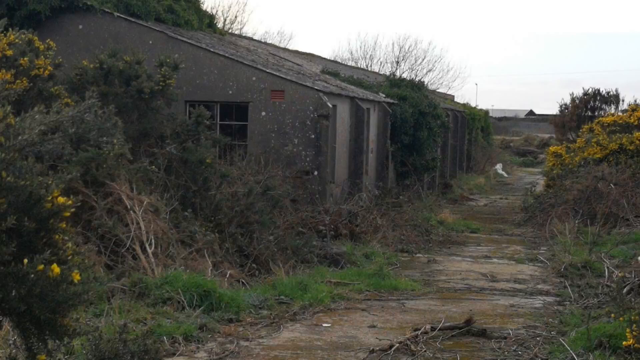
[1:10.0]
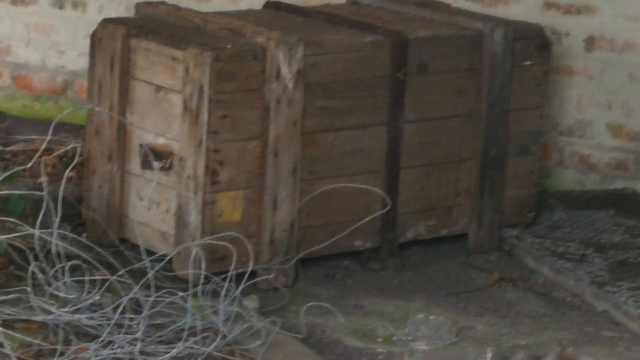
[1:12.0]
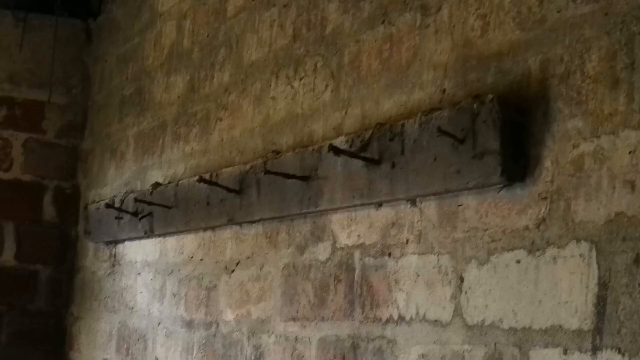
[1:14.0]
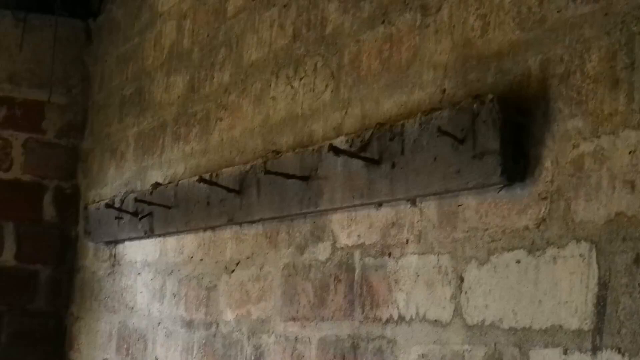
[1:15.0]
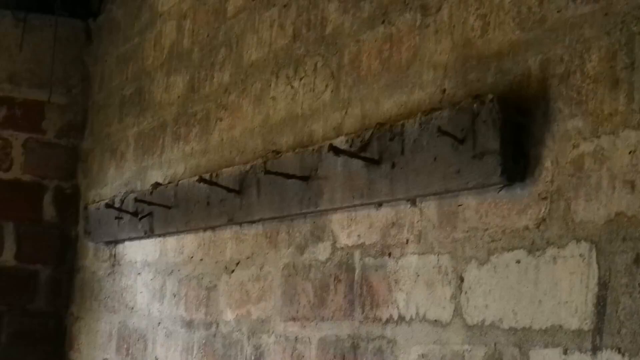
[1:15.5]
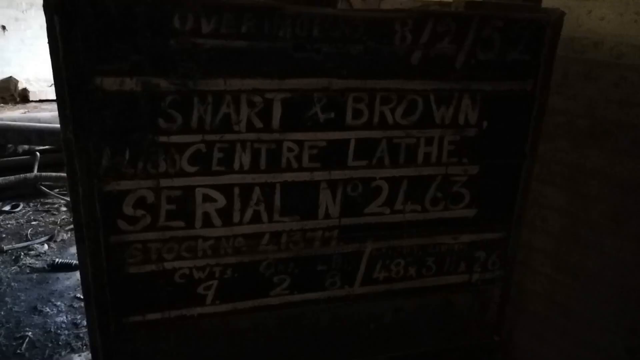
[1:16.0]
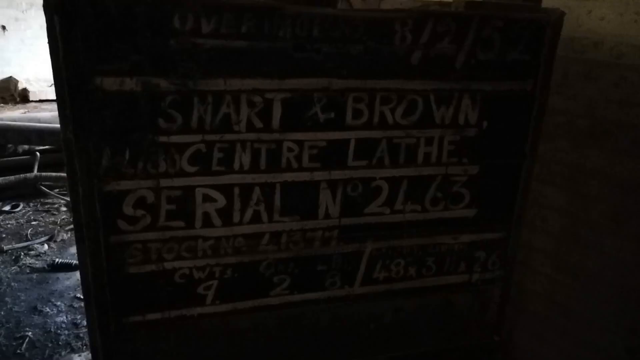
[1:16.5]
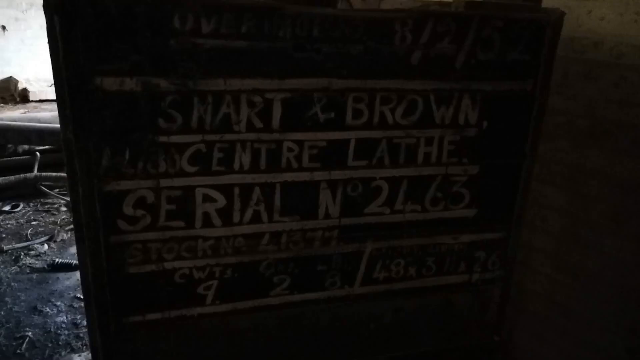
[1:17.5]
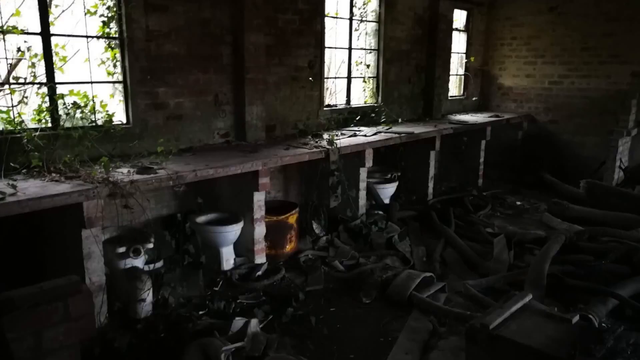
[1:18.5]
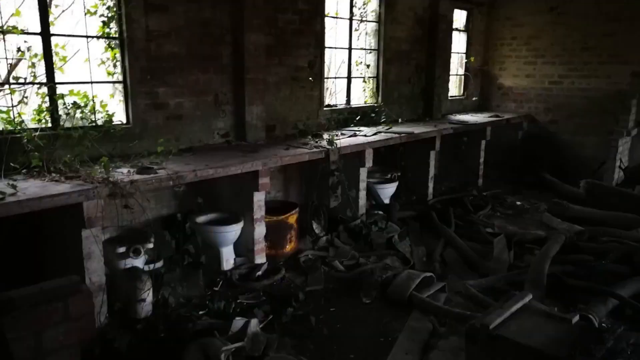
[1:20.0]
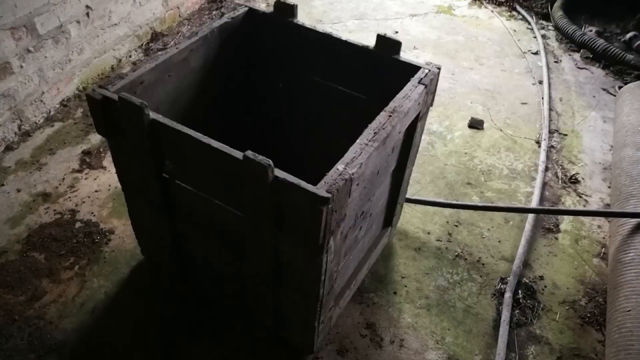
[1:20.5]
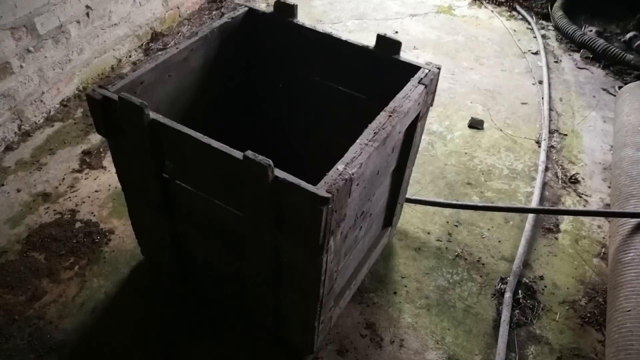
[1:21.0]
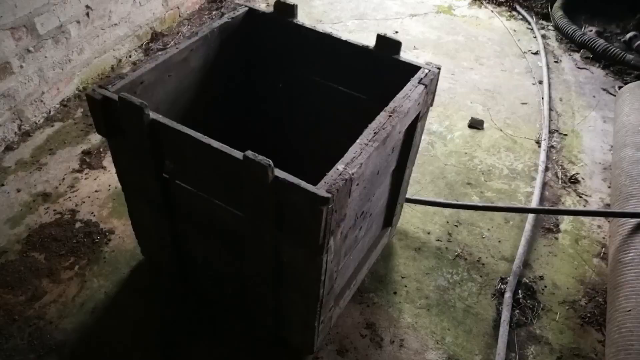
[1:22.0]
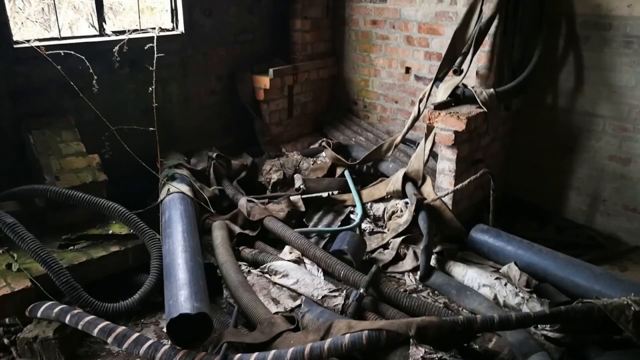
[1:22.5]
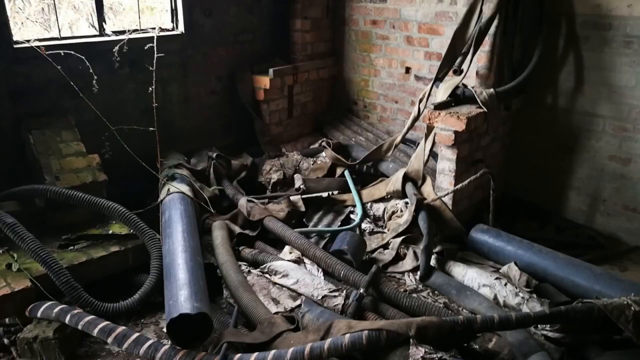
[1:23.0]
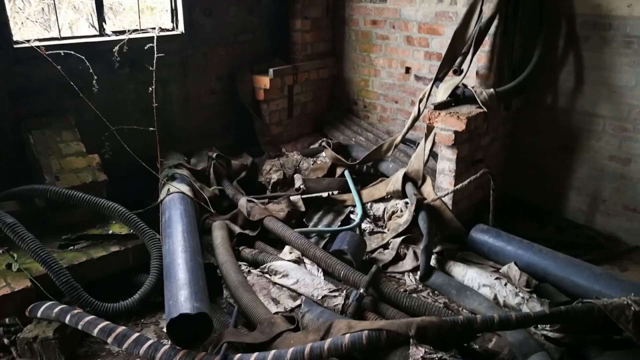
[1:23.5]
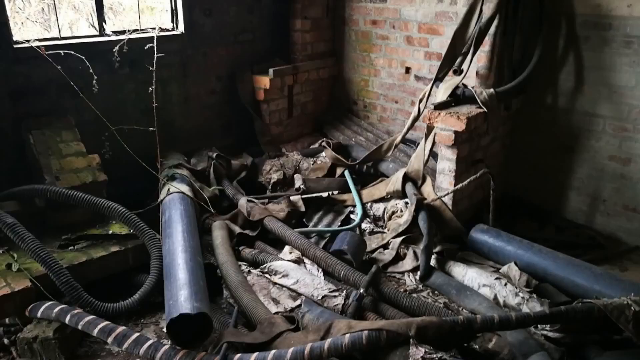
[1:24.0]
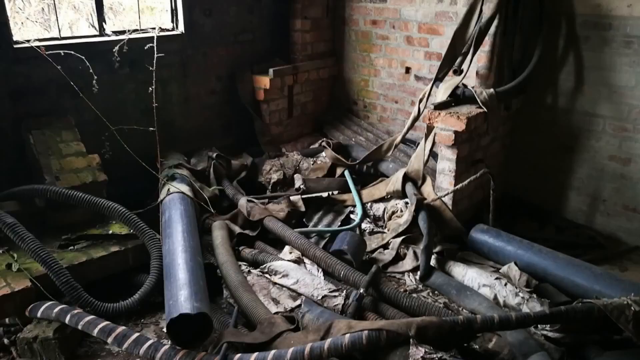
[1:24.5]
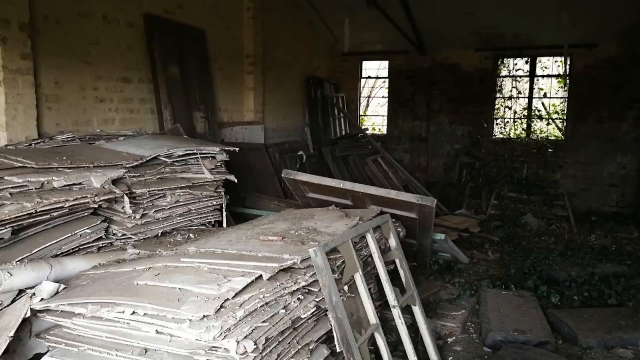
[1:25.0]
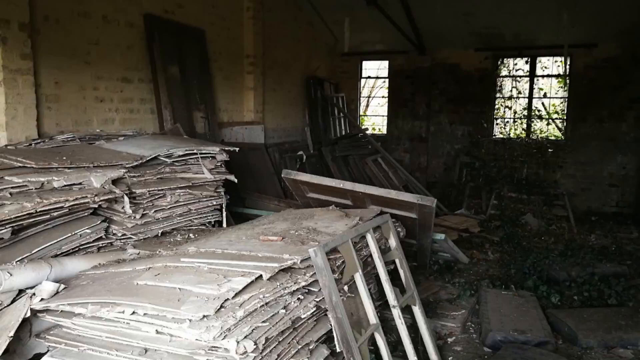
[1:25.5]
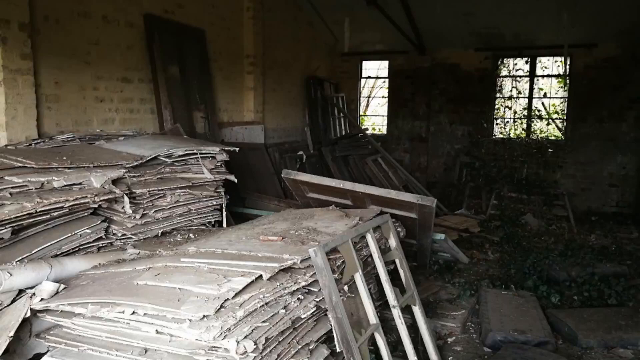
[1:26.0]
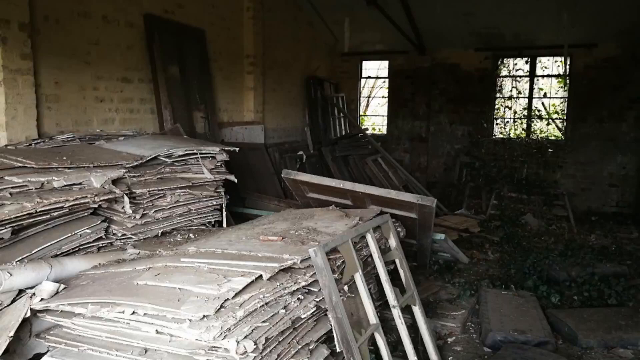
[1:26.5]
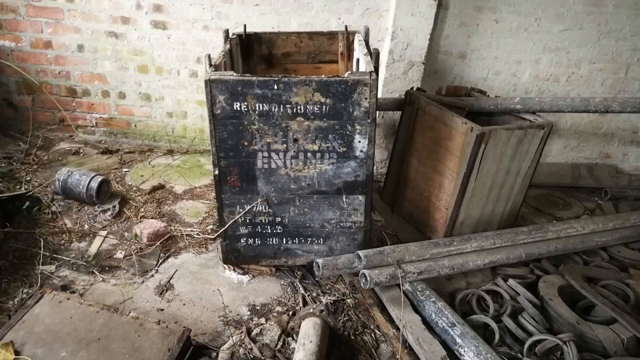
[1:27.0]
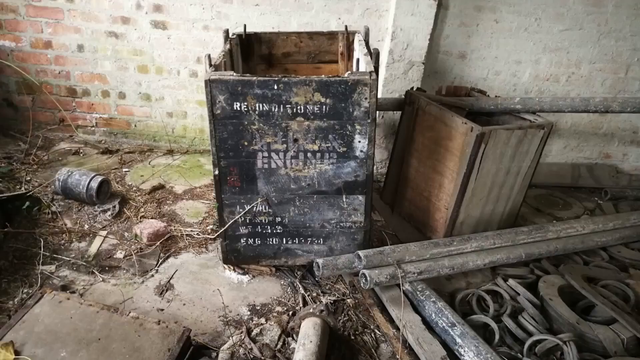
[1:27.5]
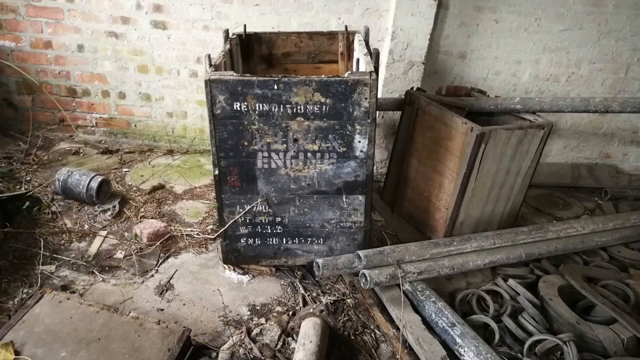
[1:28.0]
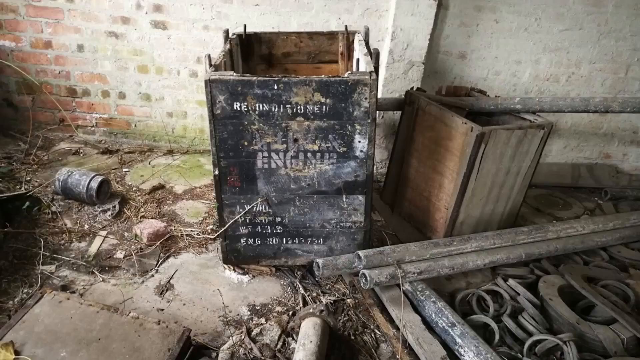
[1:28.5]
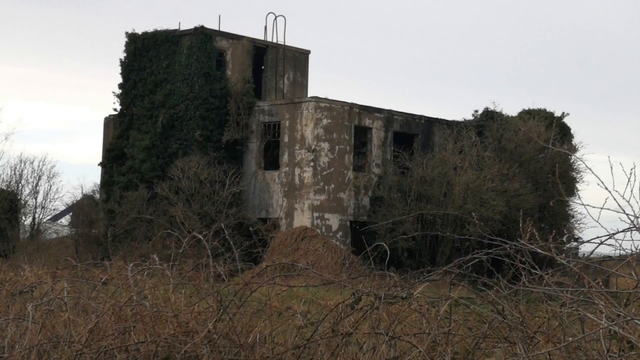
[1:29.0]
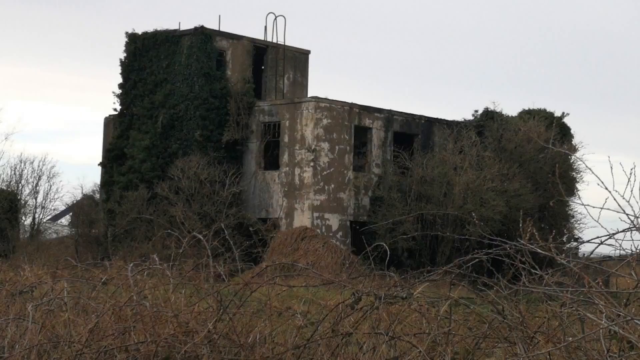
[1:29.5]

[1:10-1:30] The inside and outside of an abandoned cement and brick structure are shown. Inside there is an unopened crate, and there are hooks for hanging clothing on one wall. The inside is red brick, so weathered that it looks like it is deteriorating. One section looks like a sink area, and beneath it are what appear to be porcelain toilets. It is dark, and vegetation is growing in through the windows. There are unidentified items, tarp, polyurethane or plastic tubing, bricks lying around, and metal pipes and fittings. The outside has been overtaken by nature, with vegetation growing on the building. It is in the countryside, and there do not appear to be any other buildings close by.